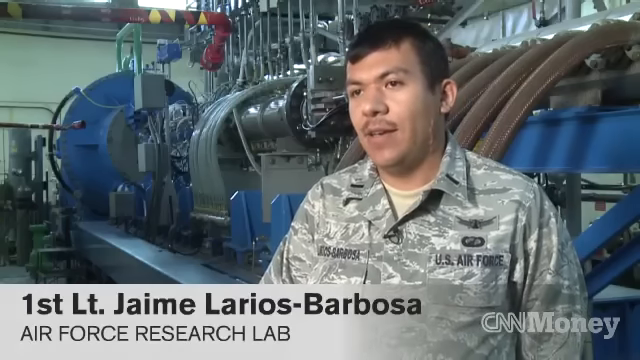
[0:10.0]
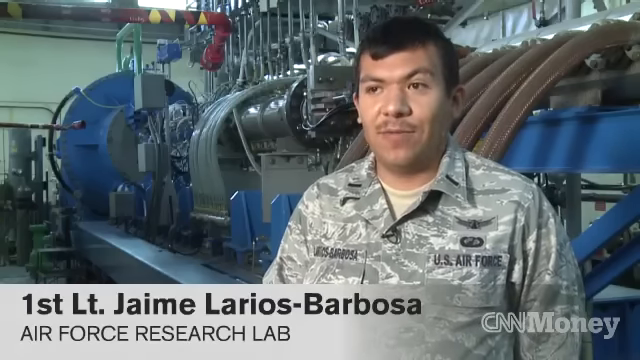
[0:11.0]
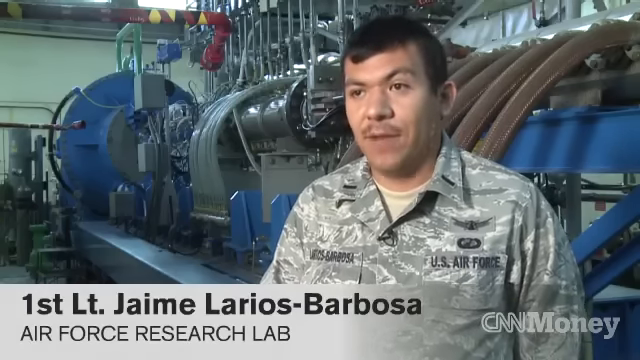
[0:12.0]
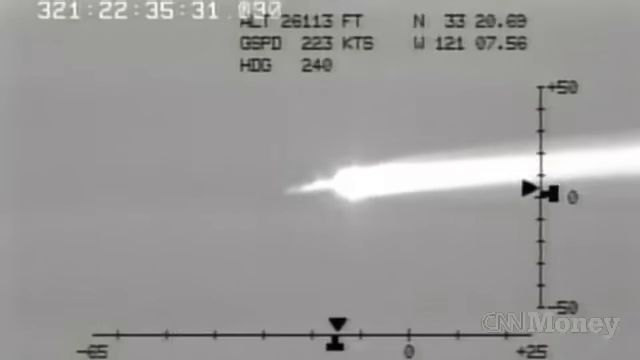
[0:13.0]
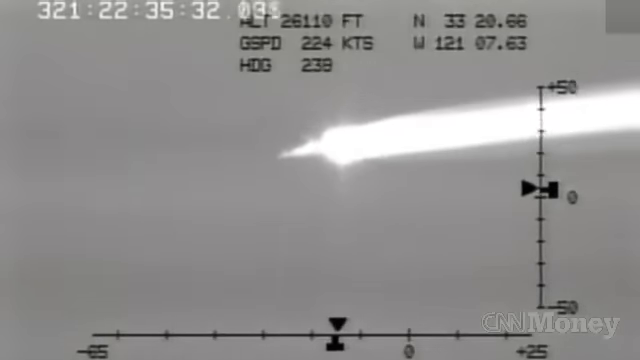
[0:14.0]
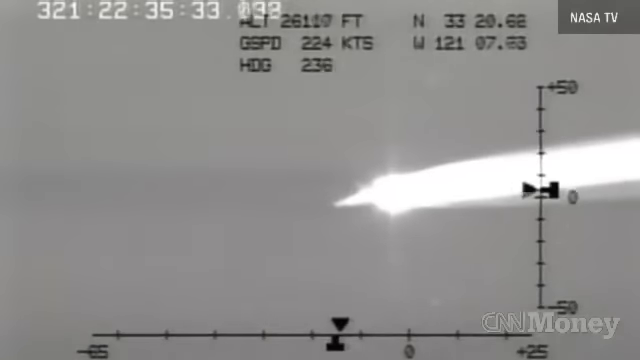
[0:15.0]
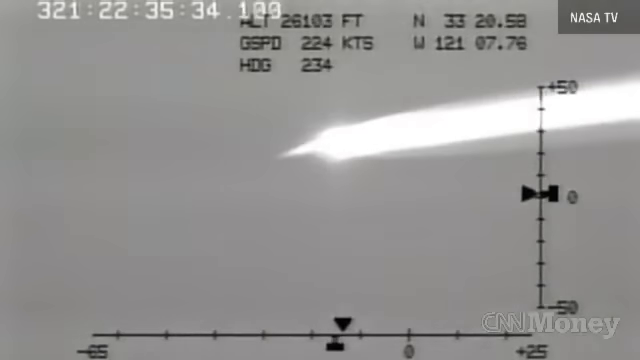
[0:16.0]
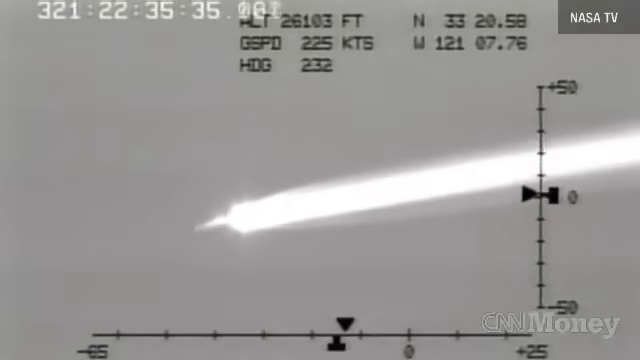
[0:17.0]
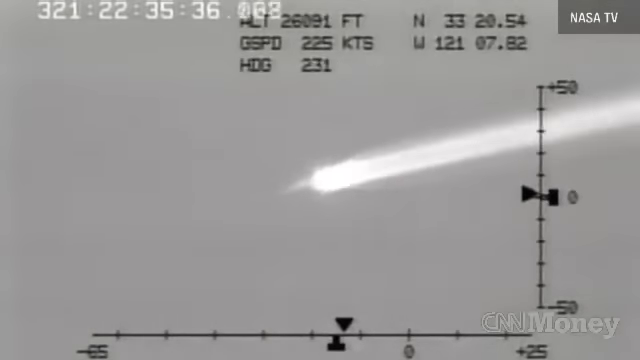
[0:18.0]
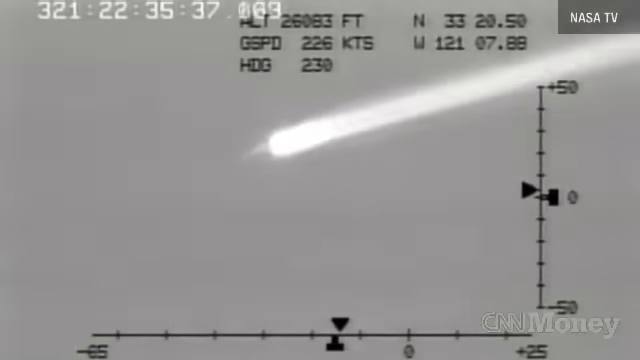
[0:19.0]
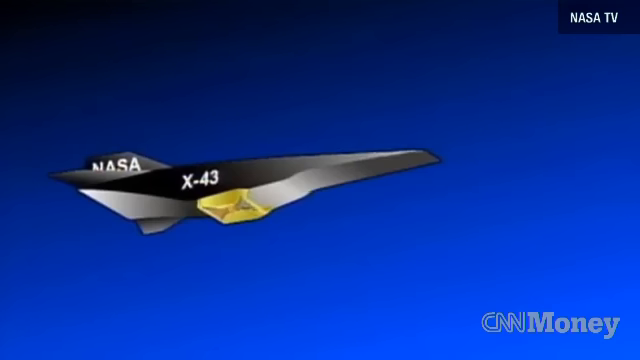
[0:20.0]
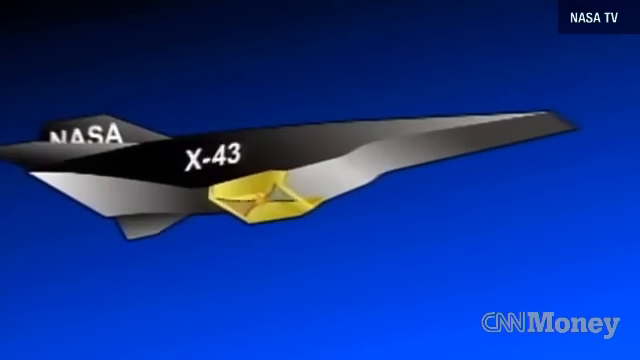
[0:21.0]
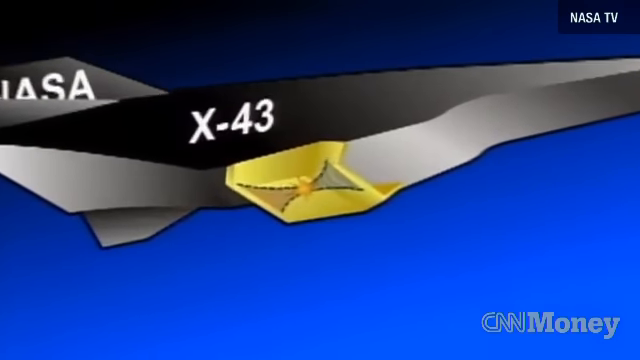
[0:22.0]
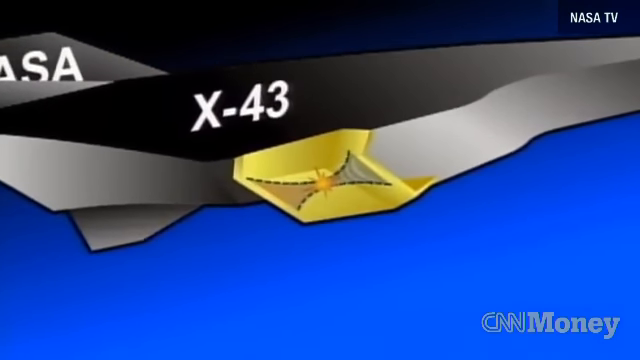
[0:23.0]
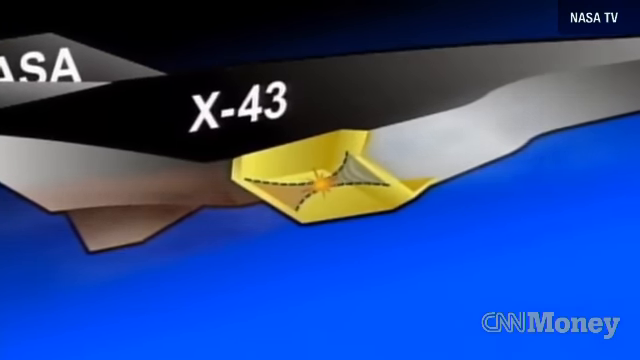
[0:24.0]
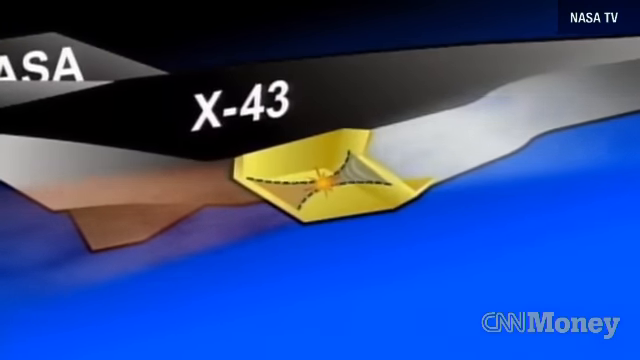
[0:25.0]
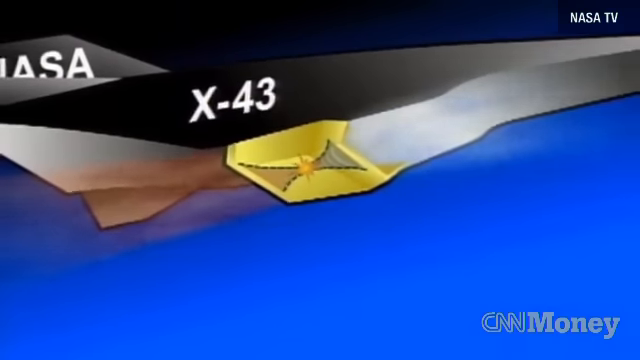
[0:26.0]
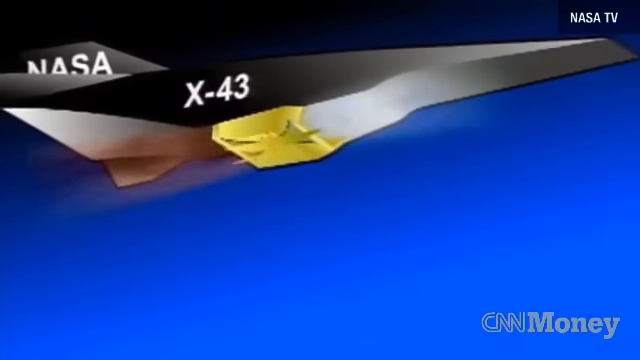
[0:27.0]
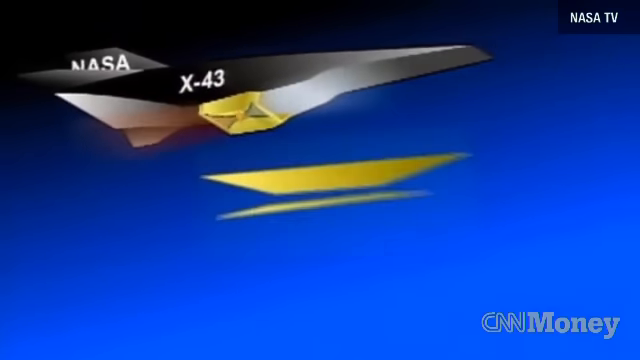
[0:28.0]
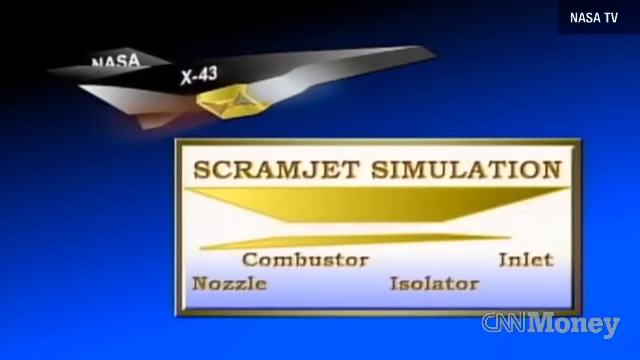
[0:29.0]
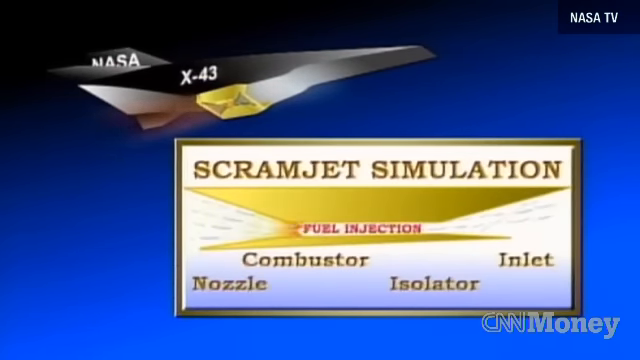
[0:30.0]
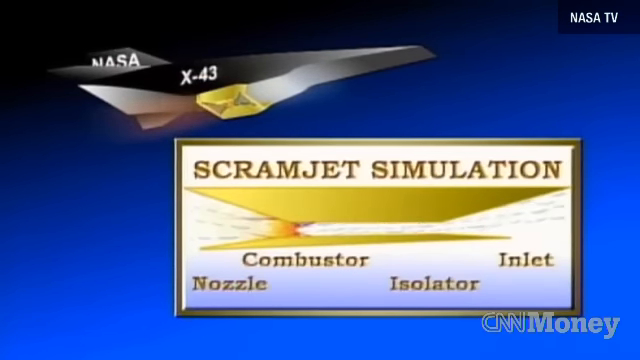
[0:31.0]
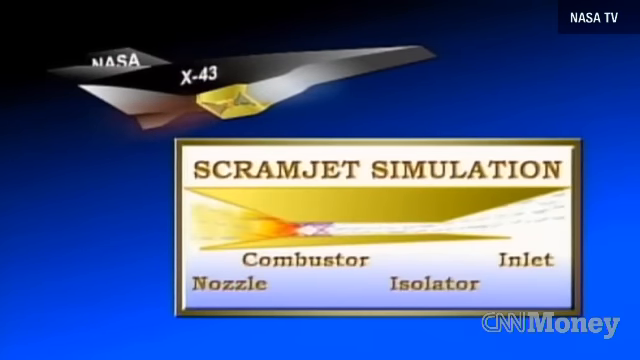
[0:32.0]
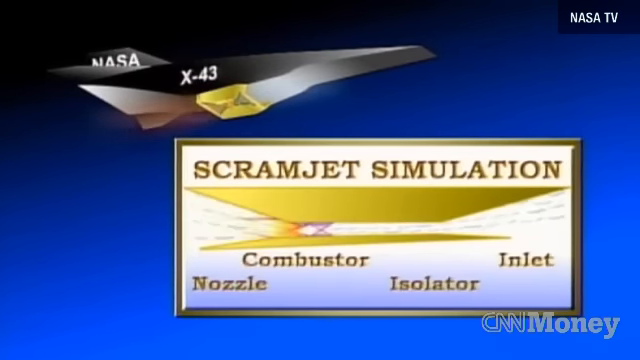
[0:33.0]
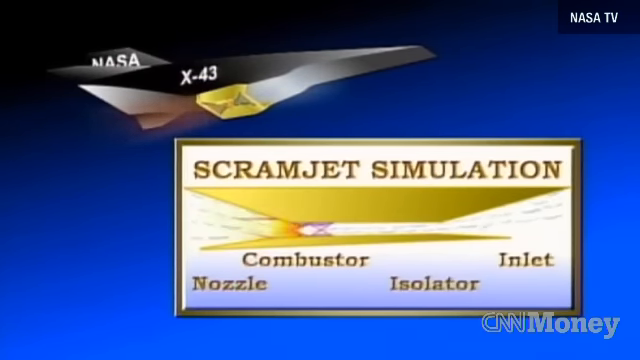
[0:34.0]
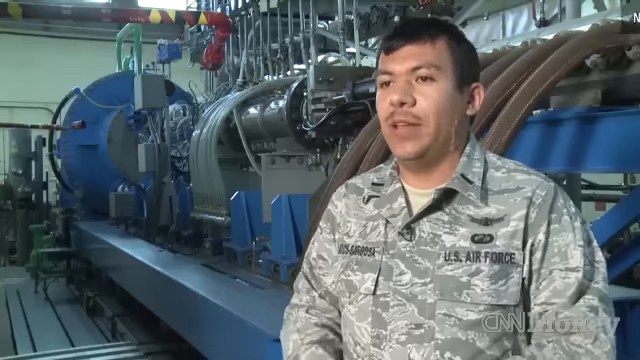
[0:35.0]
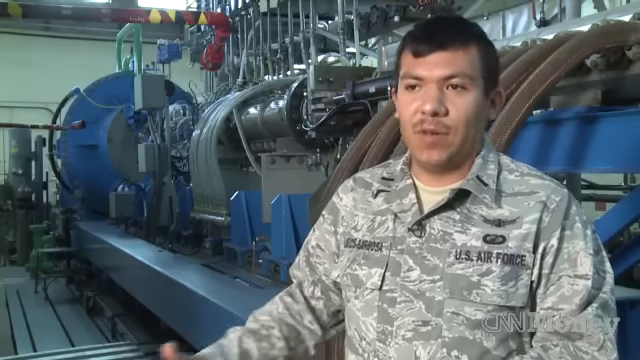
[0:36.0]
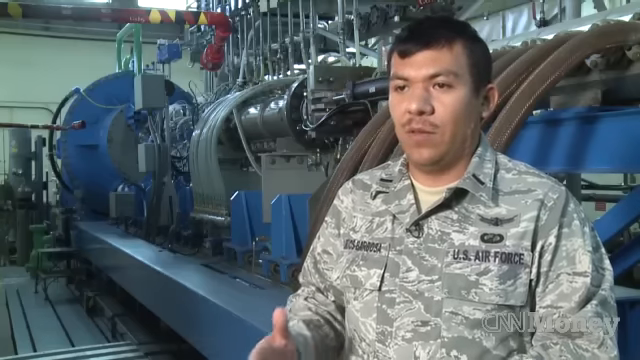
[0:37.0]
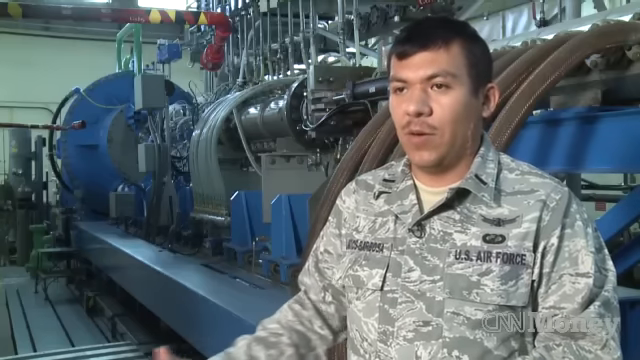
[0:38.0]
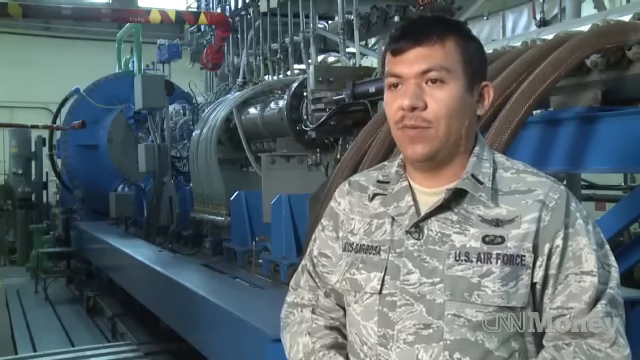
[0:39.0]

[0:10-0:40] First Lieutenant Jamie Barbosa of the Air Force Research Lab speaks while standing in front of some of the large equipment. The footage then switches to black and white, showing what looks like something in the air, possibly a plane, with something that looks like fire falling behind it as the camera follows it. "NASA TV" appears in the top right-hand corner, and the object comes down very fast. Next comes an all-blue screen showing what looks like some type of aircraft, almost like a jet, marked "NASA" and "X-43"; it is kind of black with yellow on the bottom. What looks to be smoke comes through the bottom and exits as what looks to be brown or black smoke. The text reads "scramjet simulation" with the labels "nozzle," "combustor," "isolator," "inlet" and "fuel injector." Another screen follows reading "combustor," "inlet," "nozzle" and "isolator," and then the video returns to Lieutenant Barbosa.